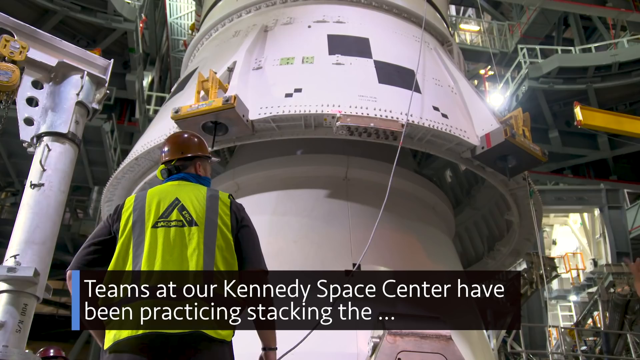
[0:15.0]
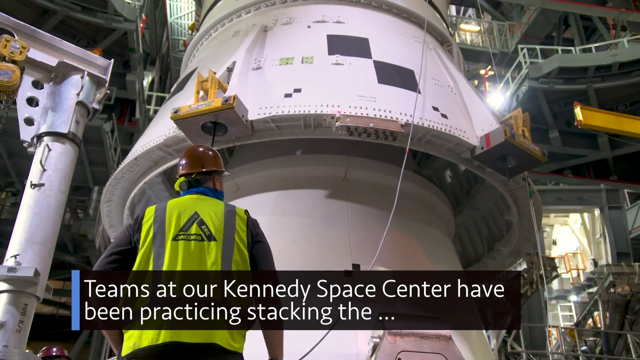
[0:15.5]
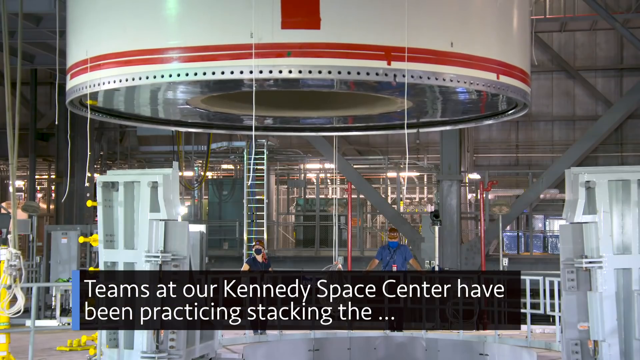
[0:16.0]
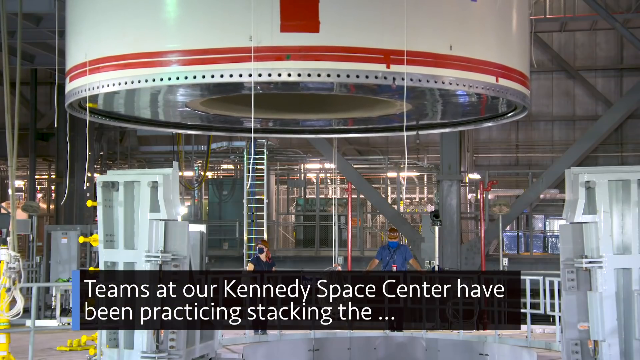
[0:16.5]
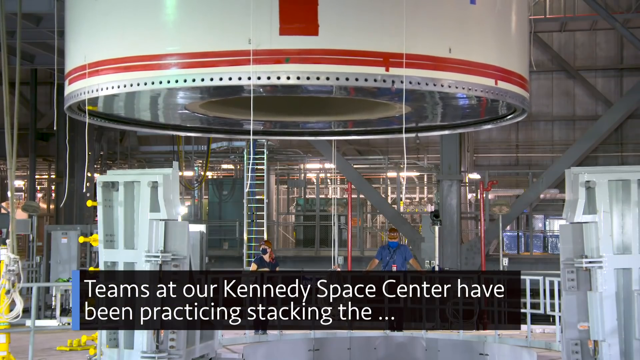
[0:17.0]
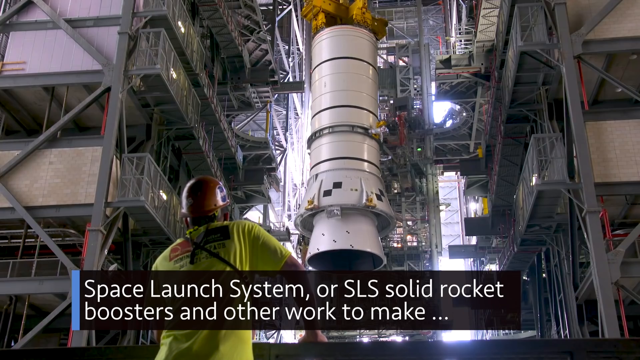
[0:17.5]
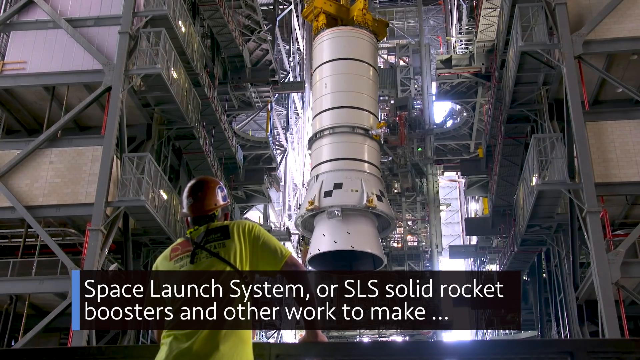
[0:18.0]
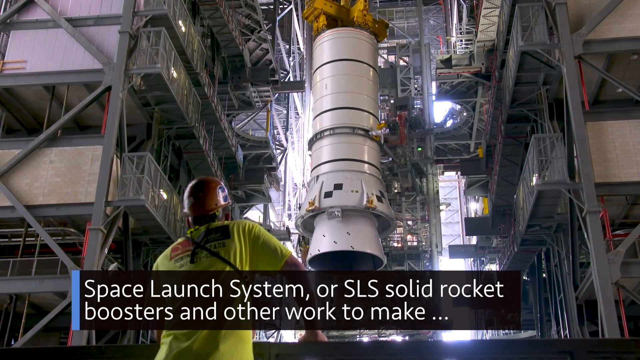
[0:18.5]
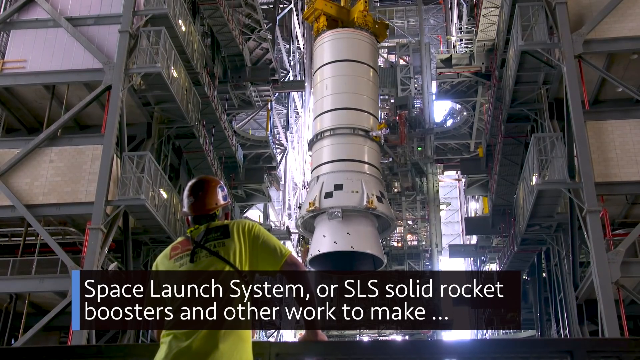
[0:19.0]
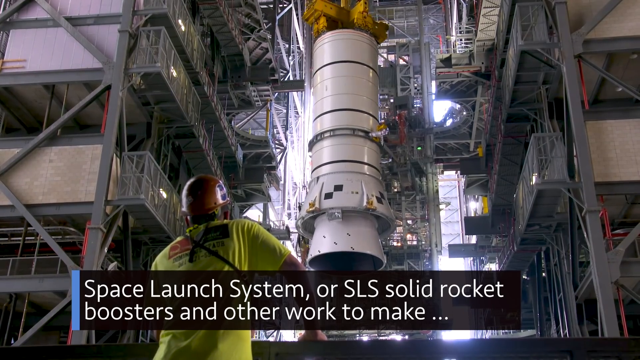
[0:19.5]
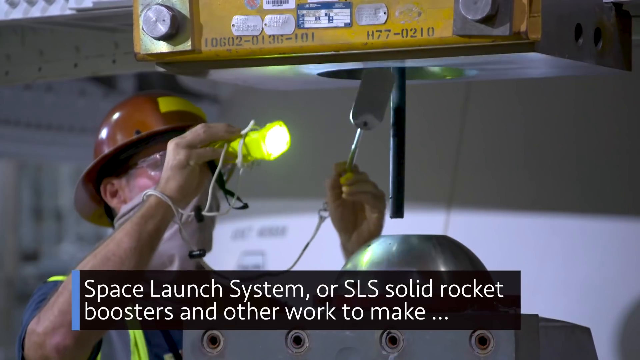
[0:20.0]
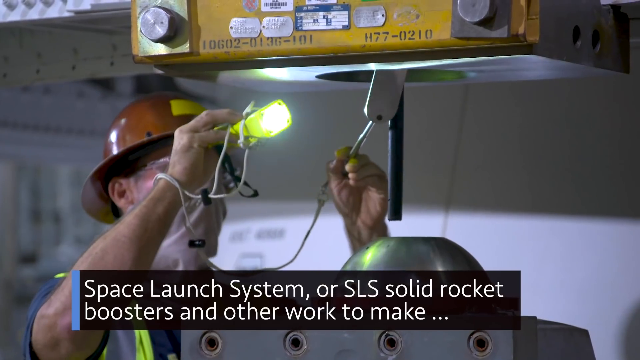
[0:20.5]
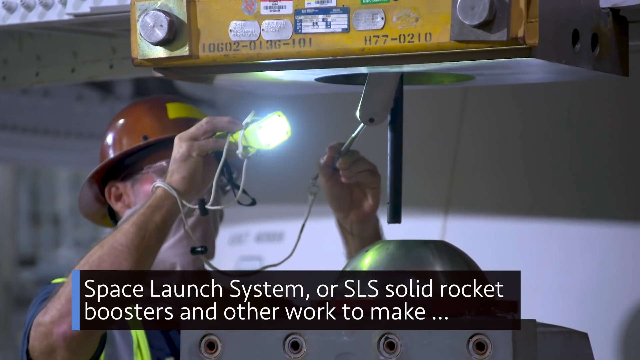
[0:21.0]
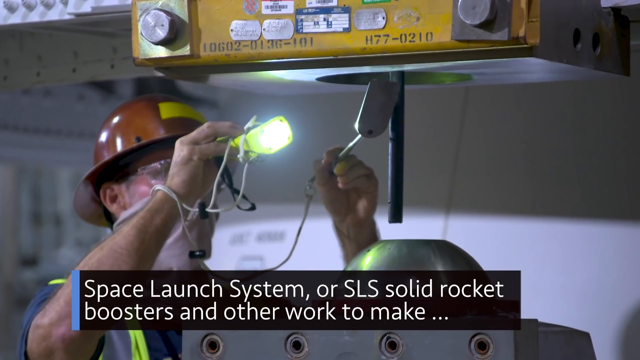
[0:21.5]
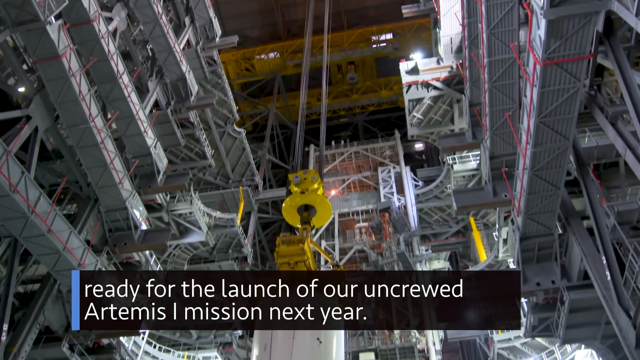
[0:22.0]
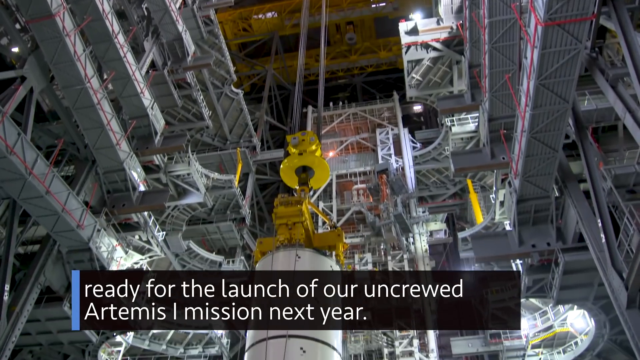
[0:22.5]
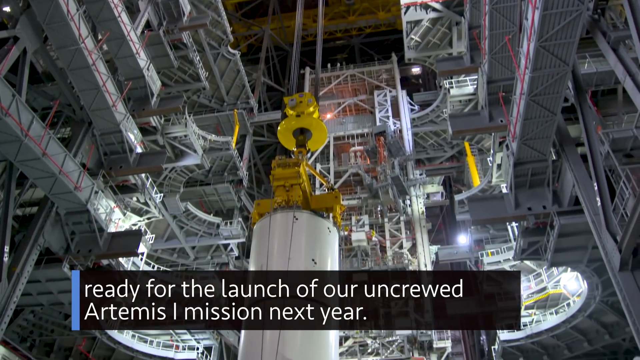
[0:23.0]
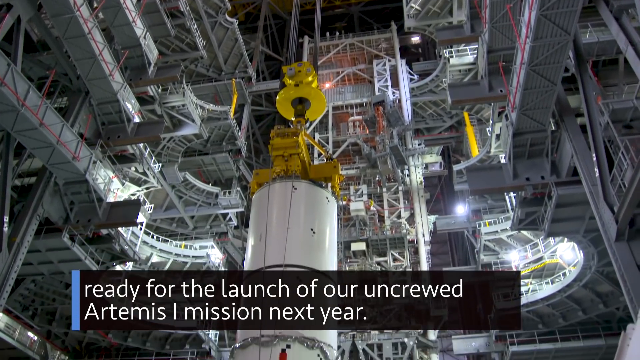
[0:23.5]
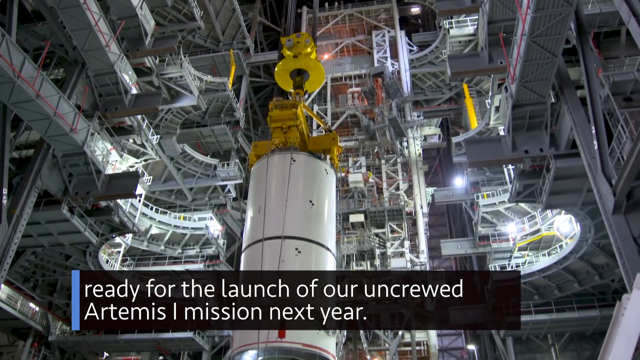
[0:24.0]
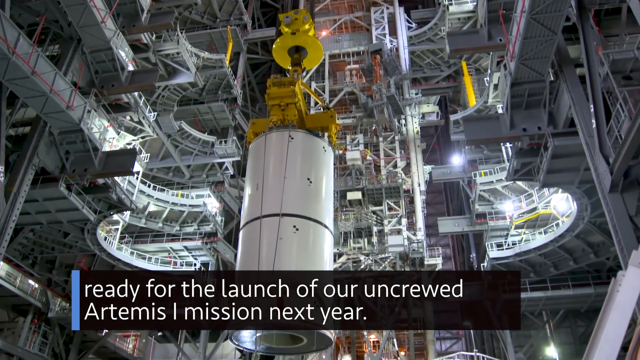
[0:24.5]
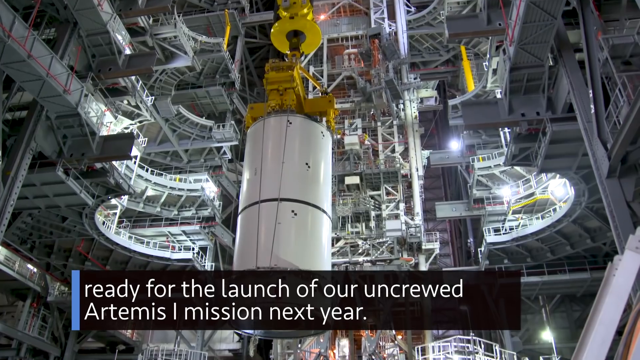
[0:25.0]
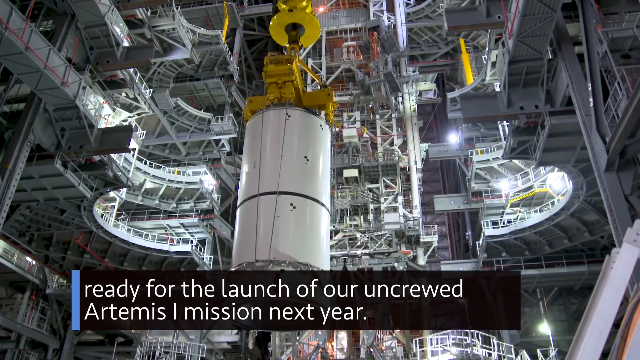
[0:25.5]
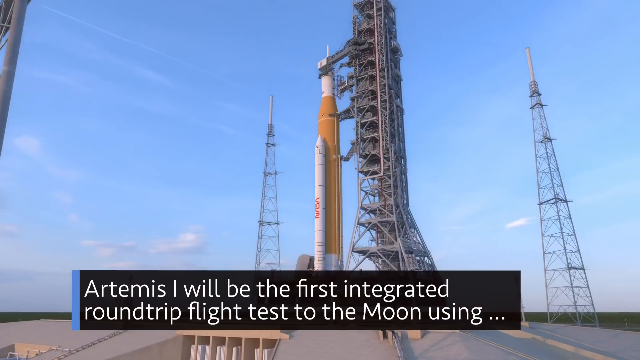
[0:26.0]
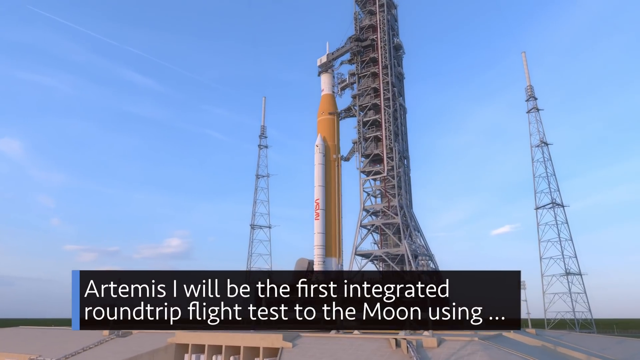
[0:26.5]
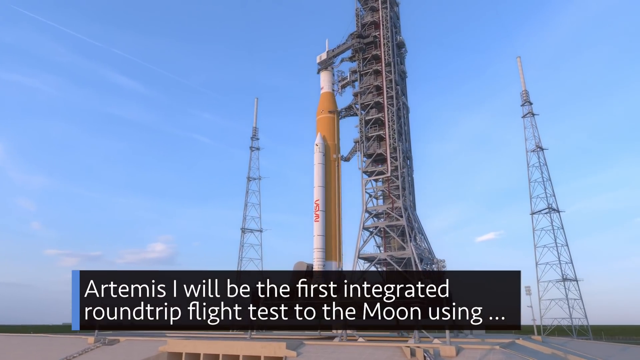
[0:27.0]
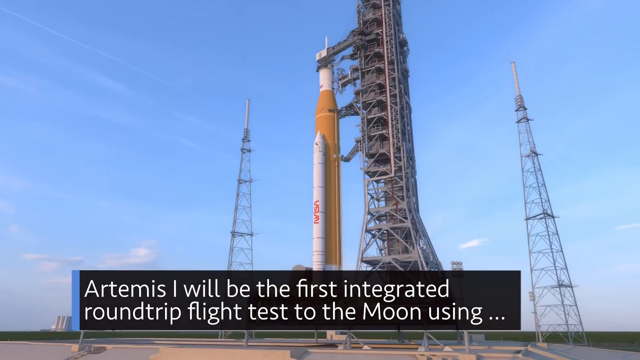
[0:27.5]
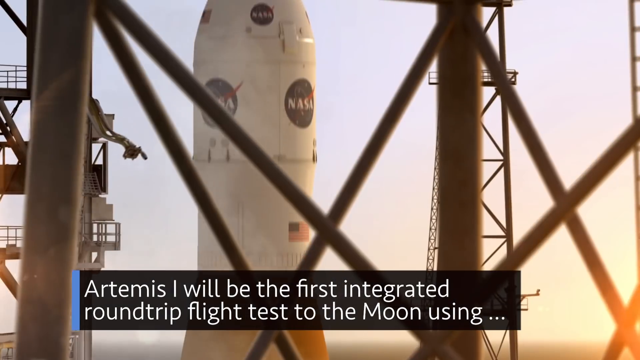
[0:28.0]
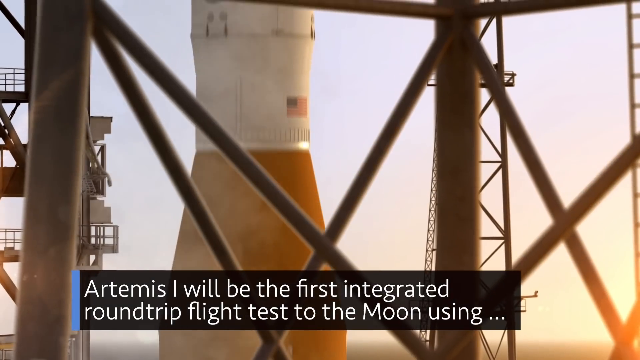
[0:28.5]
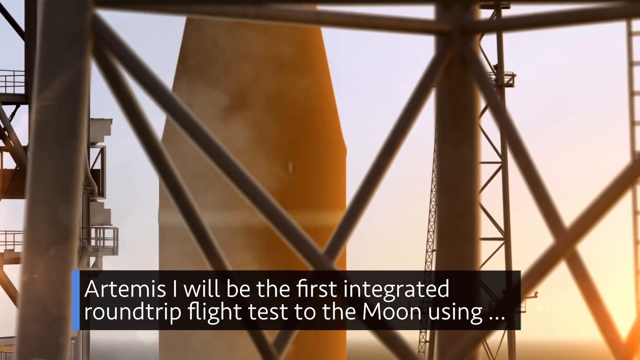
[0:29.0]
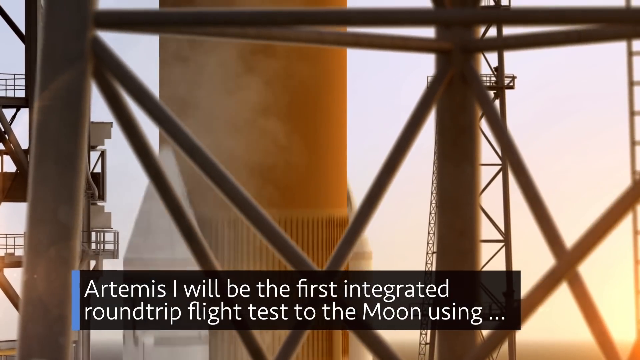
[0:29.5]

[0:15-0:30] Someone is standing right at the base of the rocket; a man is next to the bottom of it. The view steps away to show the built part of the rocket, roughly the middle part. The scene then moves to where rockets are launched, apparently the Kennedy Space Center launch pad, with the rocket next to big scaffolding. Then the rocket is shown shooting up.